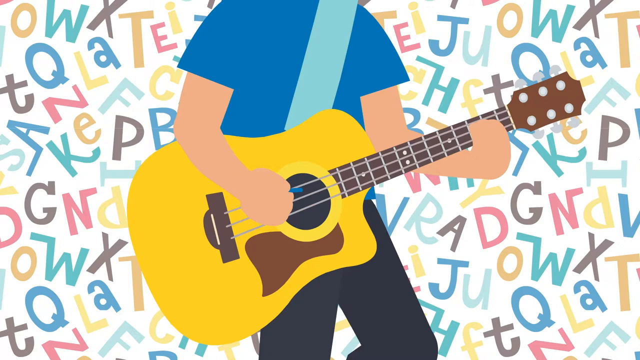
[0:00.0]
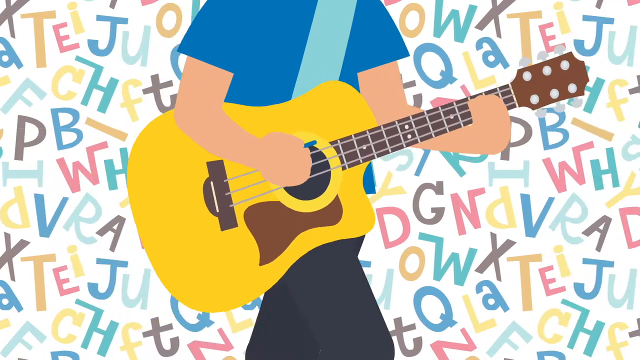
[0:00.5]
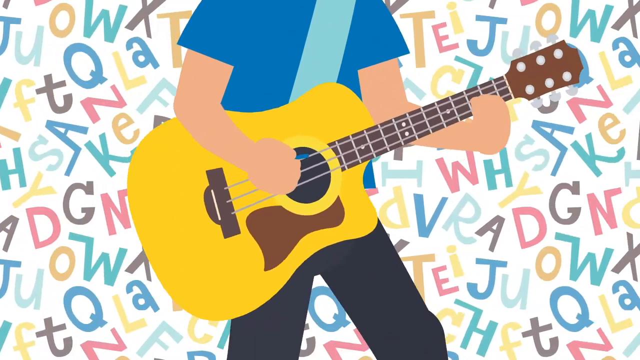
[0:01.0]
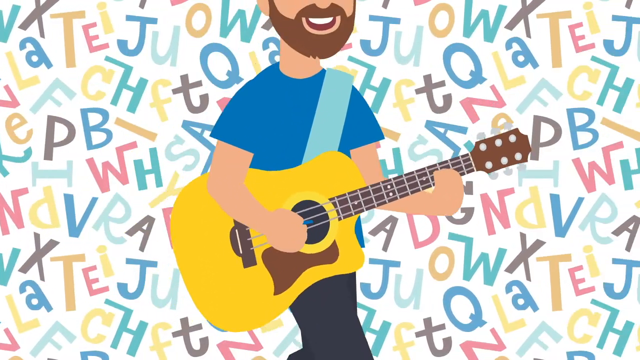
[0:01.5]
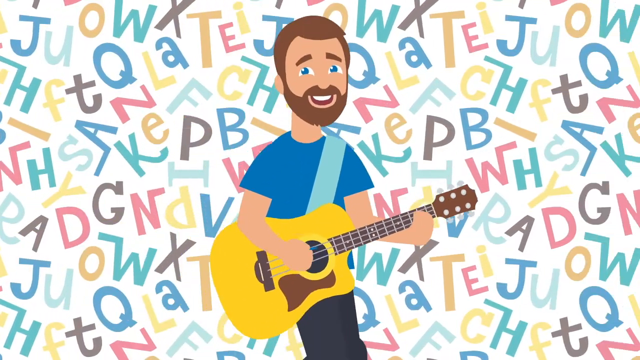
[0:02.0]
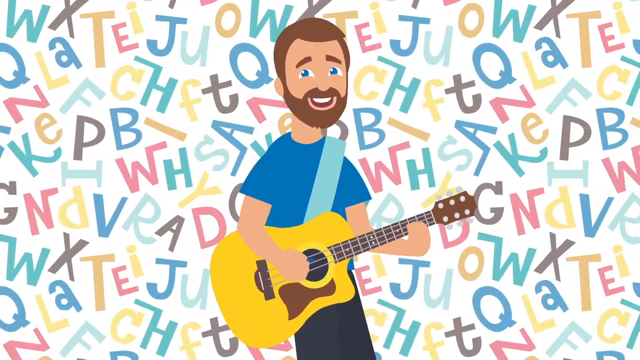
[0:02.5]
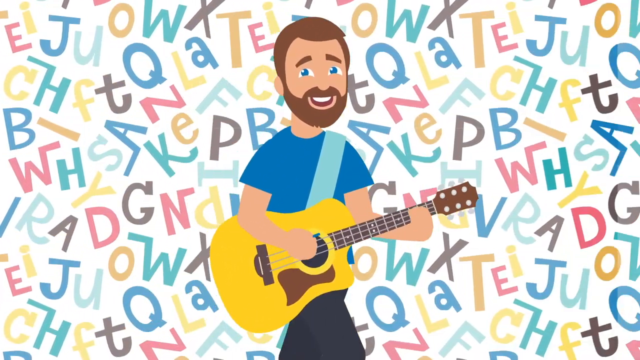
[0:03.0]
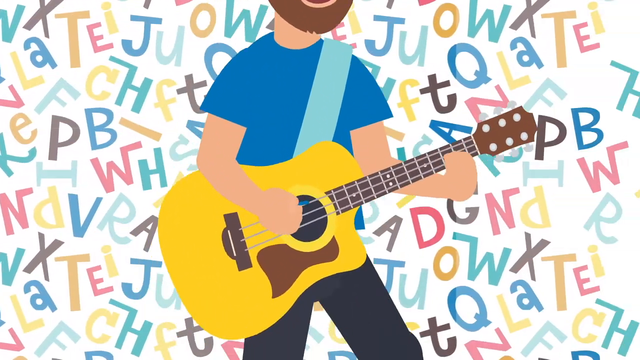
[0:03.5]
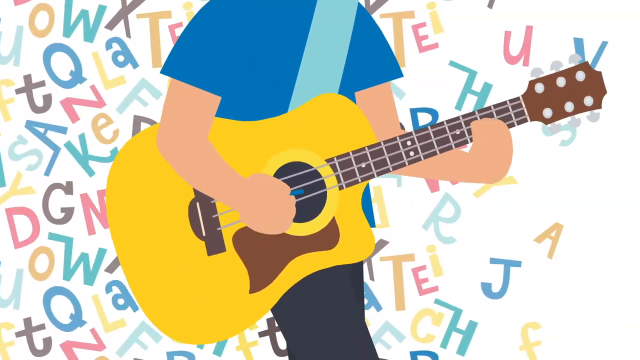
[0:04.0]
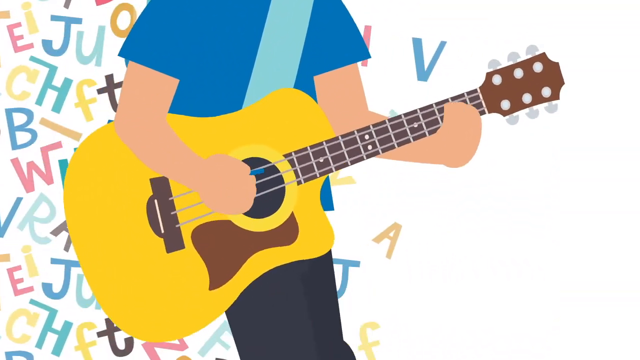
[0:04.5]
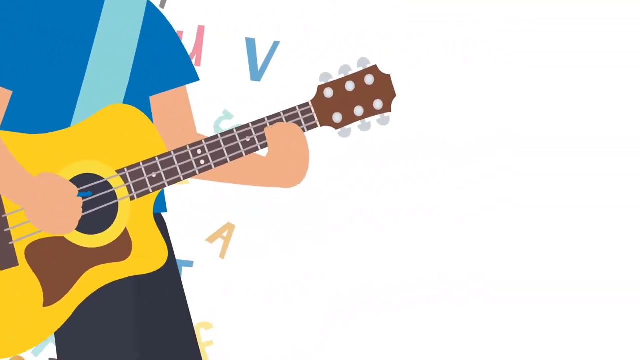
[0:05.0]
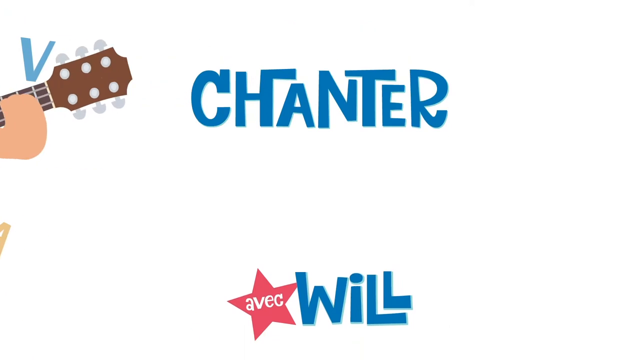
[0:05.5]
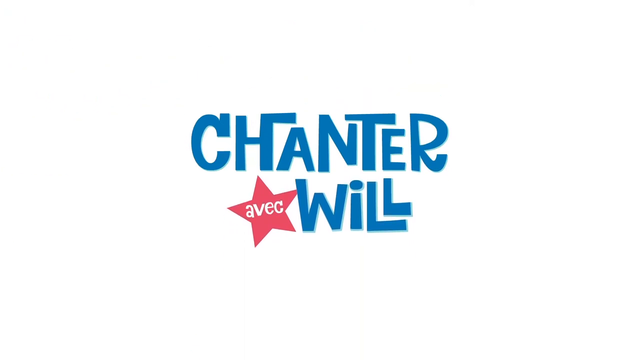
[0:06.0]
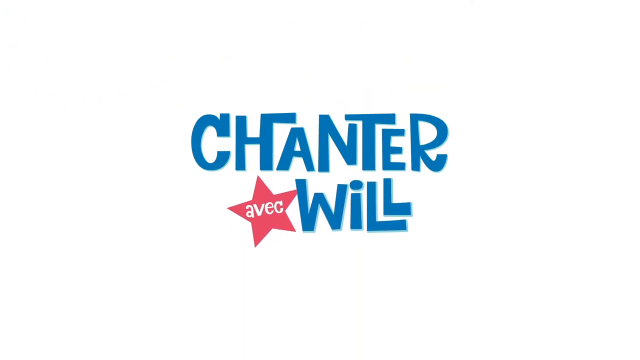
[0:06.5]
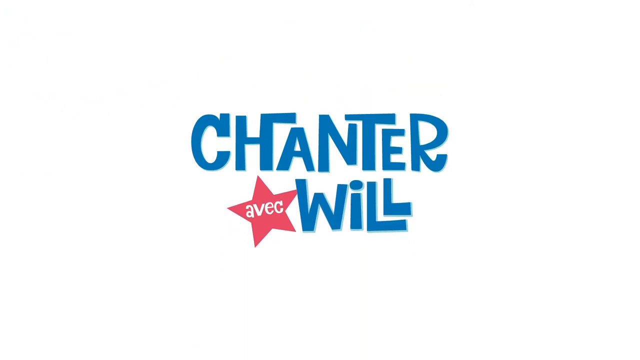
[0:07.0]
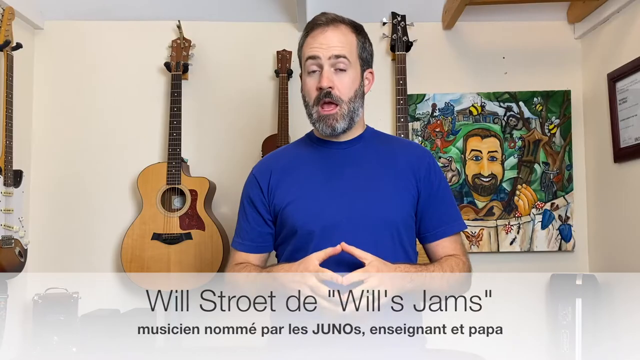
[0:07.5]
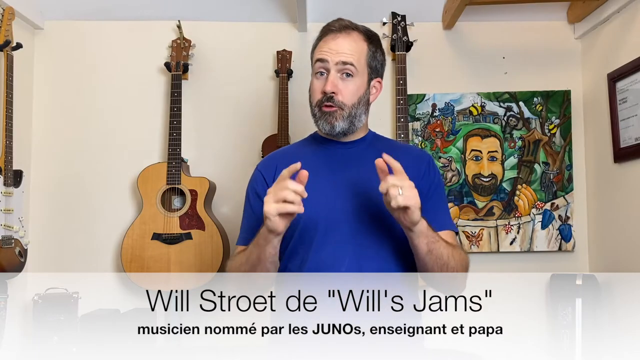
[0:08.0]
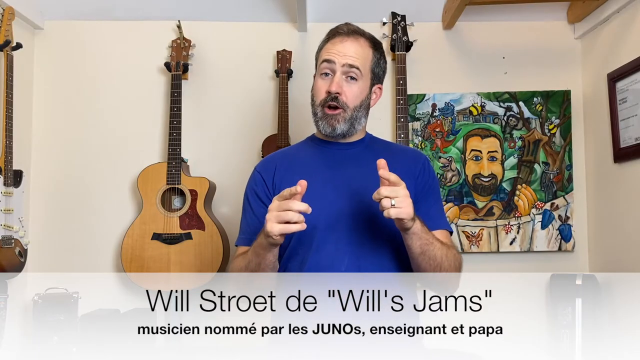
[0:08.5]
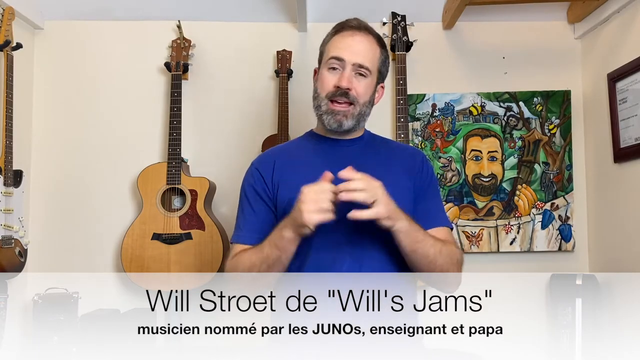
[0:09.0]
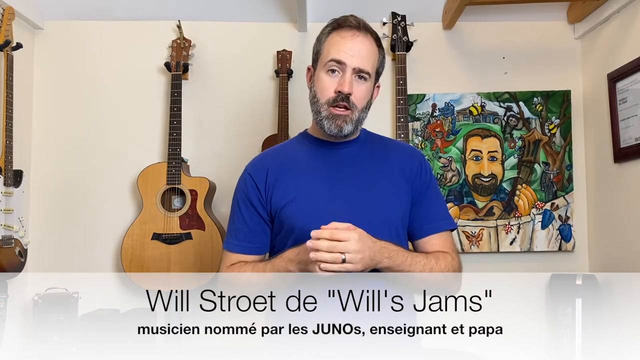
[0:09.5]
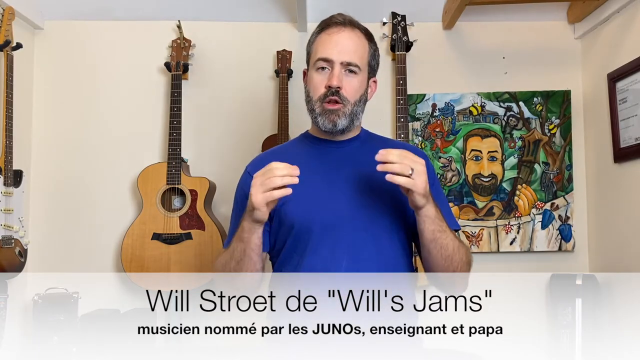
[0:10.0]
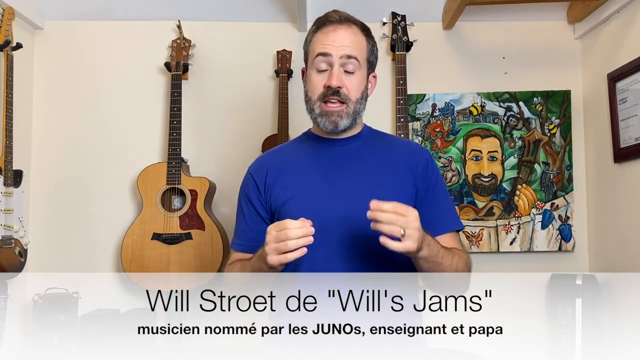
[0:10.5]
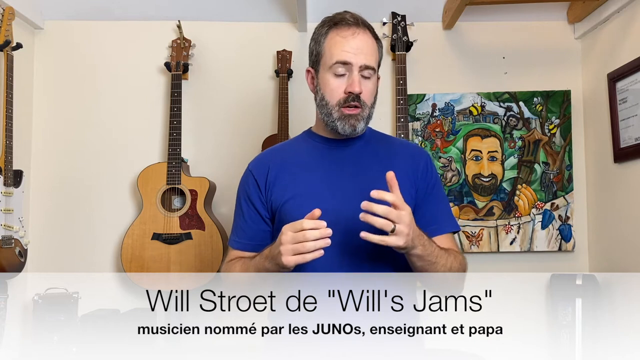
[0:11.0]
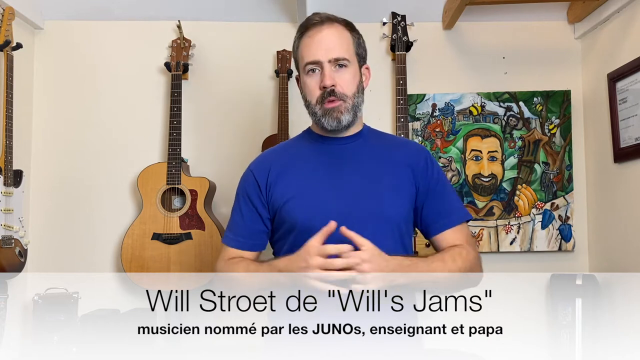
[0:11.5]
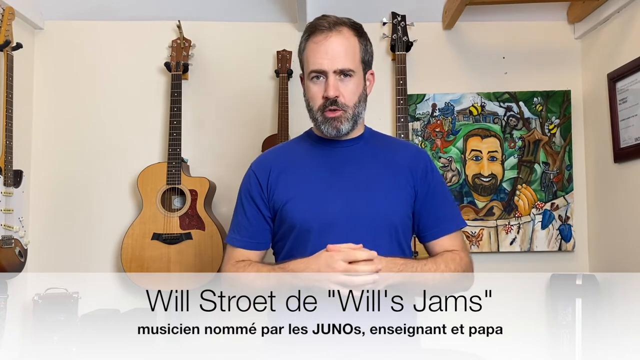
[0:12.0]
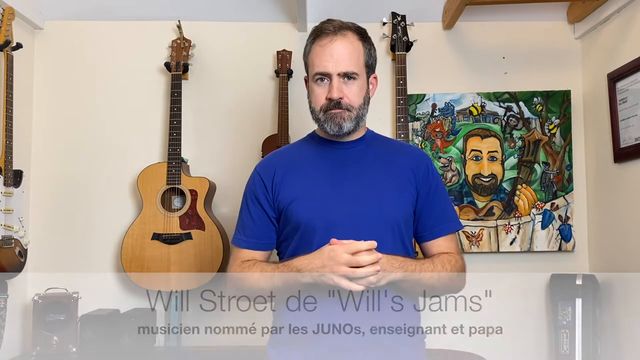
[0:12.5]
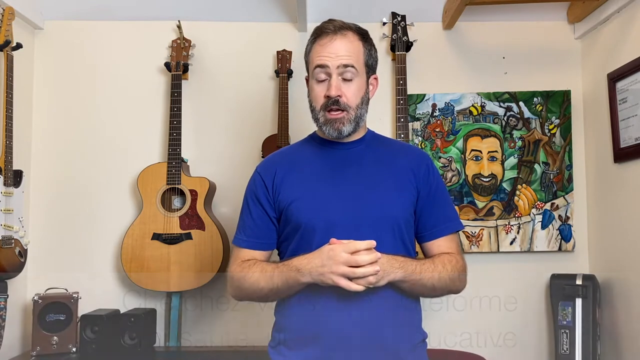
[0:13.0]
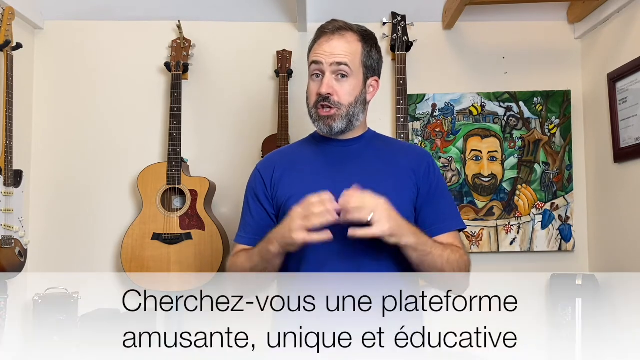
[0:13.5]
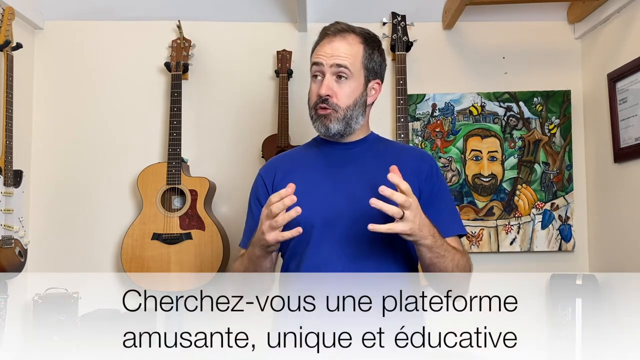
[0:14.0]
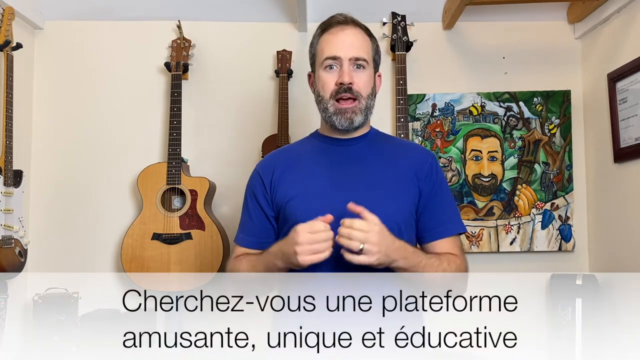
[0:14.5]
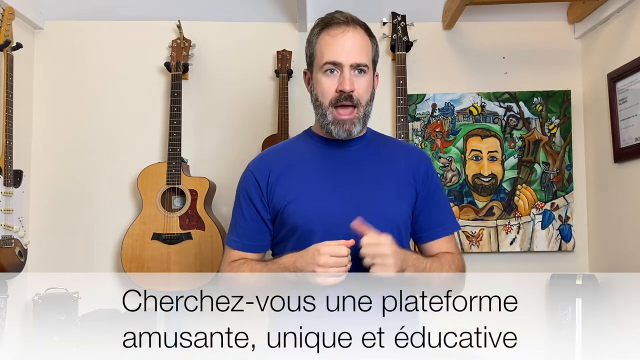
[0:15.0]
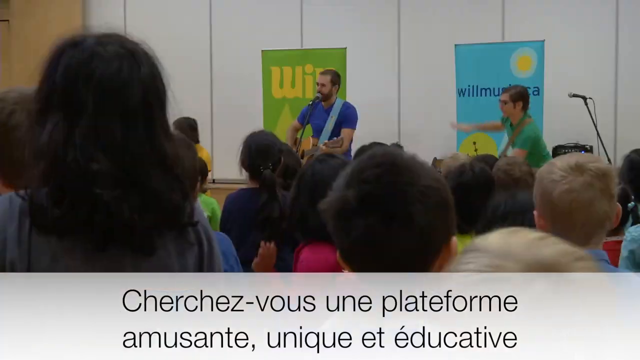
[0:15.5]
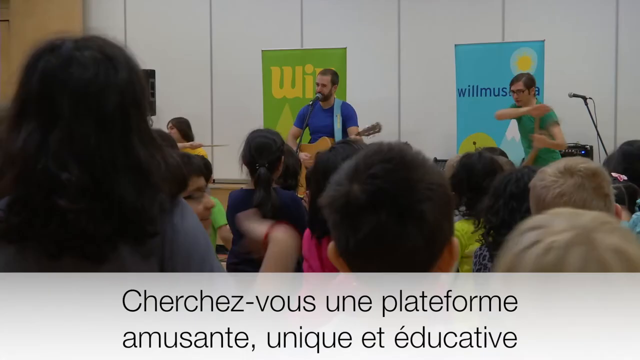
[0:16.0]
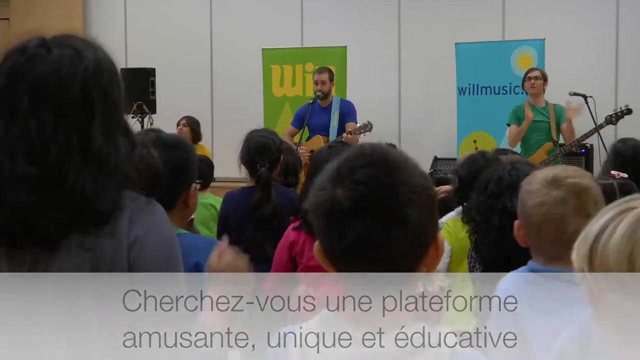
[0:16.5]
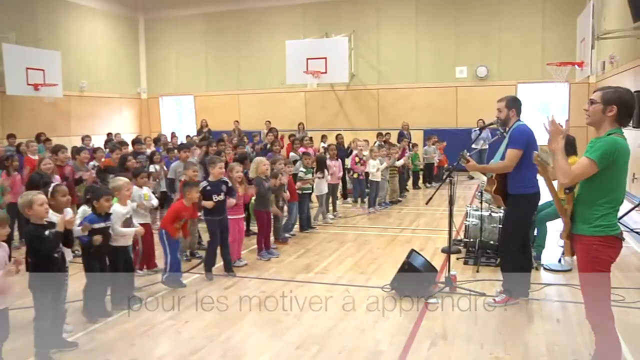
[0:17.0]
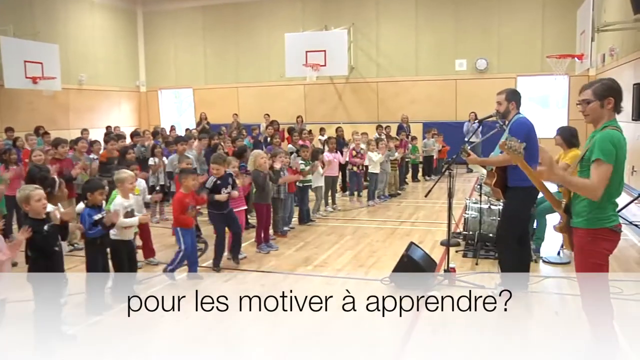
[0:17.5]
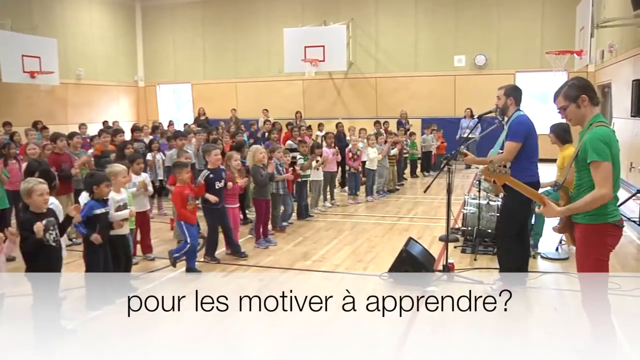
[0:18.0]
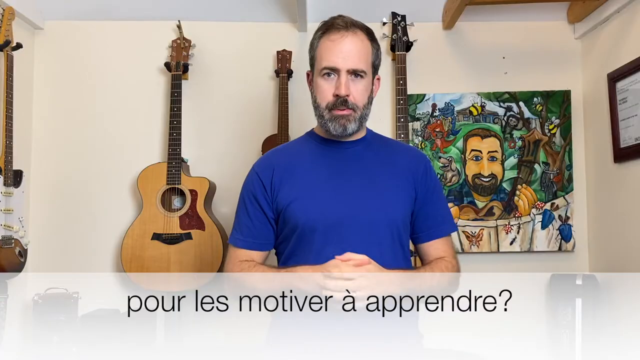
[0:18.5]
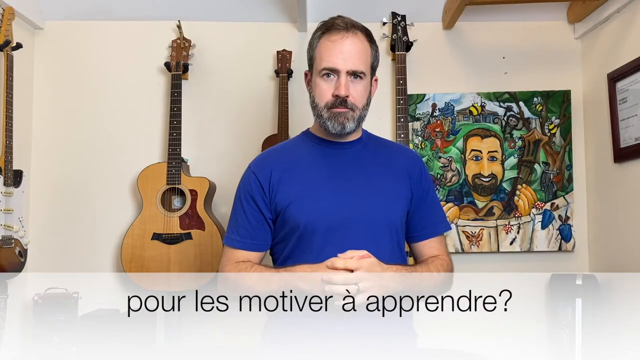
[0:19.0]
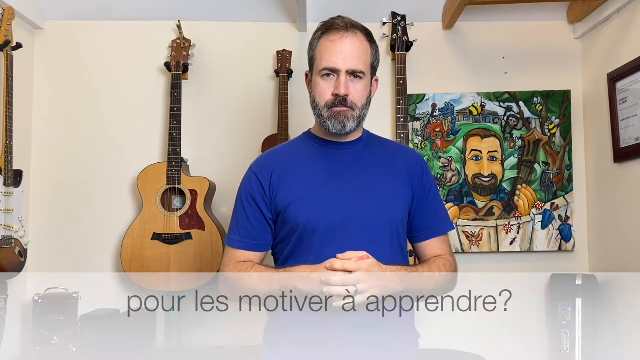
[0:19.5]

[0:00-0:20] The video opens on a white background covered with many multicolored letters, including W, A, T, F, P, E, K, N, X and others. In the background is a cartoonish or illustrated Caucasian man with brown or reddish-brown hair and blue eyes, wearing a blue short-sleeved t-shirt. He holds a yellow guitar with brown trim, supported by a light blue strap over his left shoulder, and plays it with both hands. The scene then changes to a white background with blue text reading "Chanter Wheel"; to the left of the word "wheel" is a red star containing white text that reads "AVEC". The video then switches to live action showing a real Caucasian man in a blue short-sleeved t-shirt, with guitars on the wall behind him.